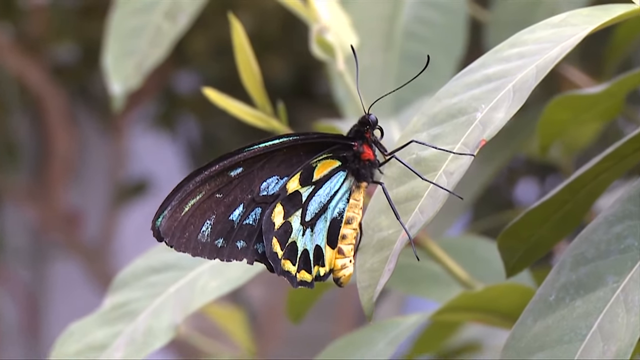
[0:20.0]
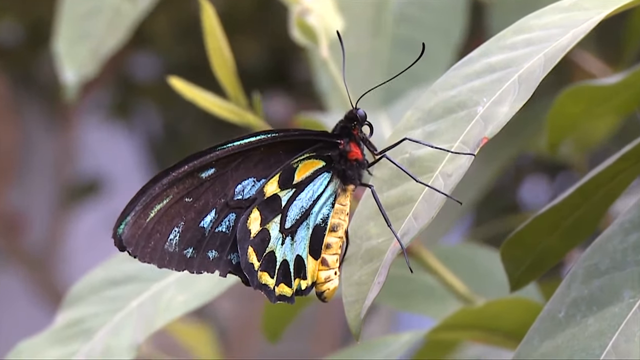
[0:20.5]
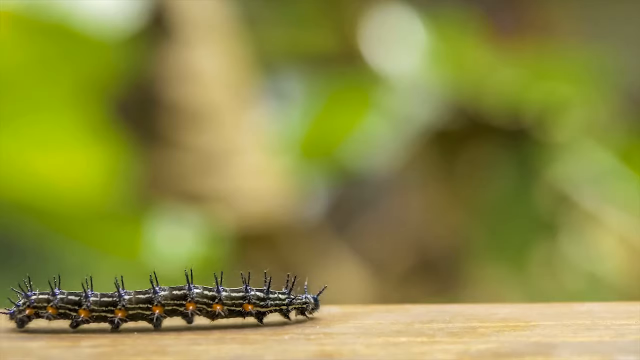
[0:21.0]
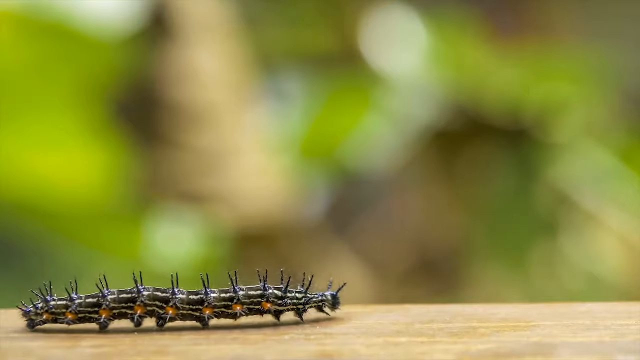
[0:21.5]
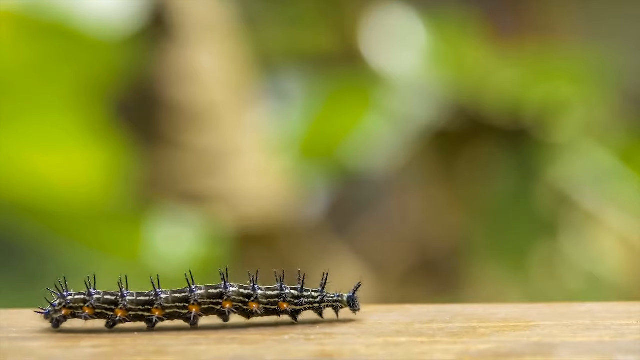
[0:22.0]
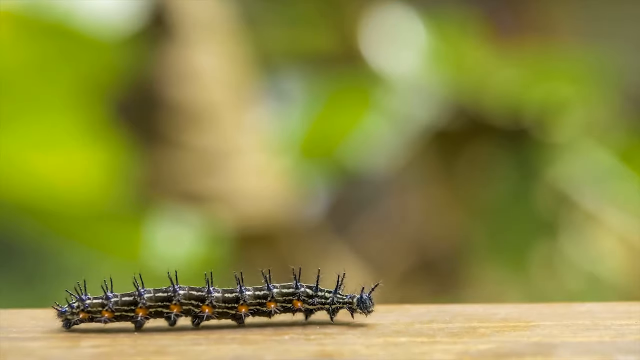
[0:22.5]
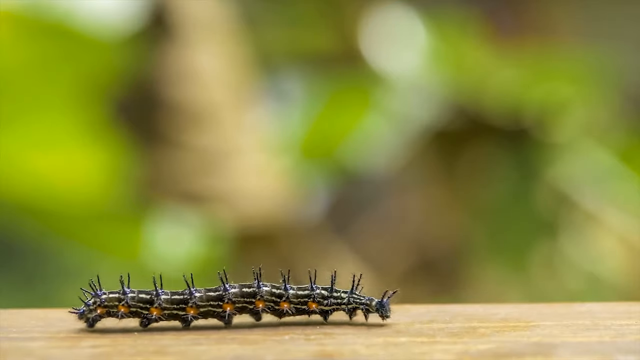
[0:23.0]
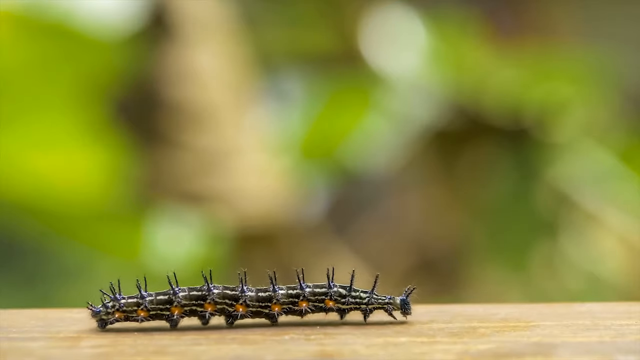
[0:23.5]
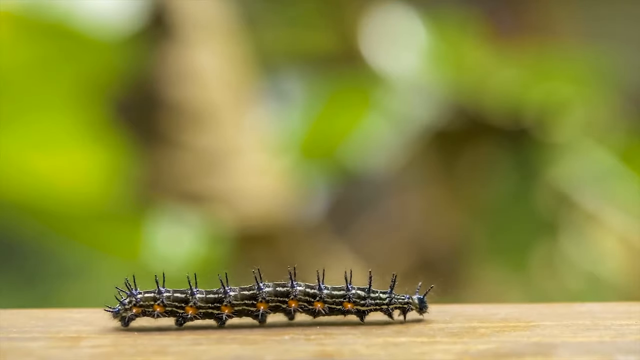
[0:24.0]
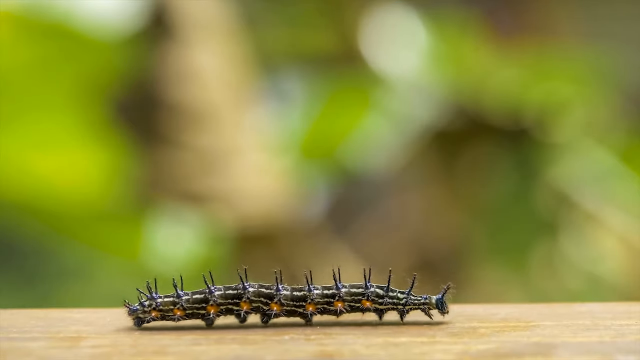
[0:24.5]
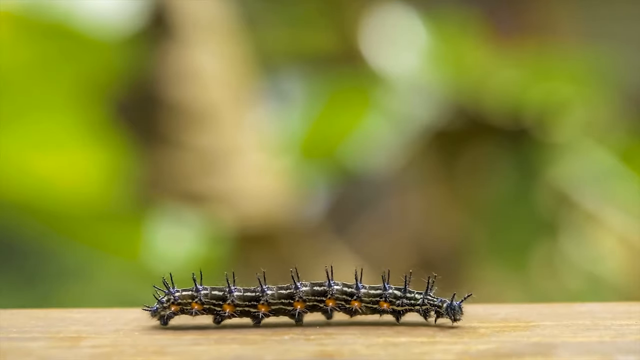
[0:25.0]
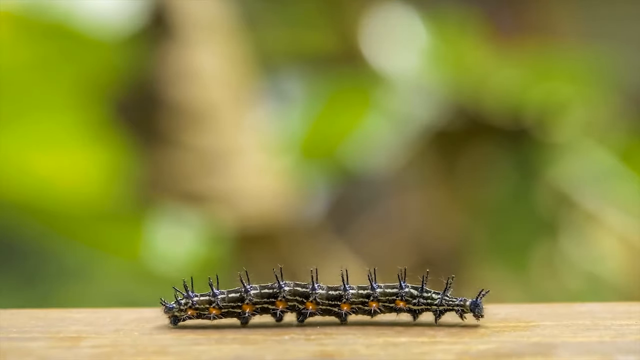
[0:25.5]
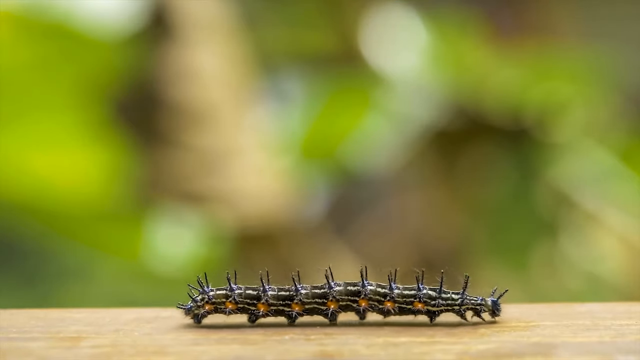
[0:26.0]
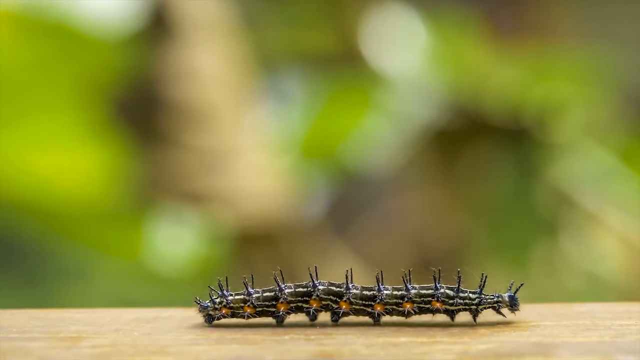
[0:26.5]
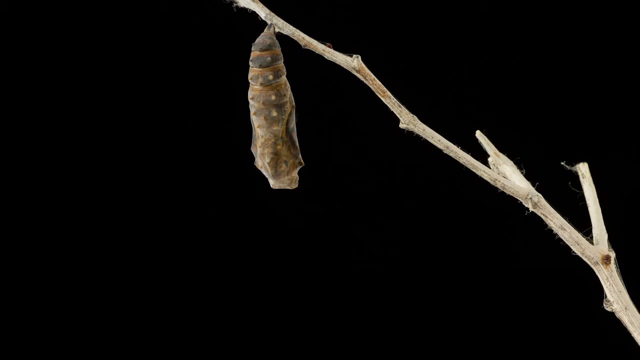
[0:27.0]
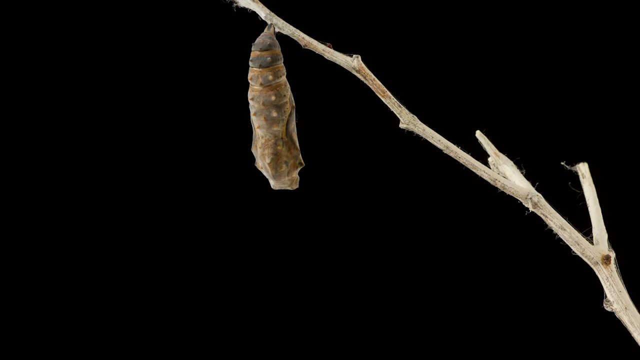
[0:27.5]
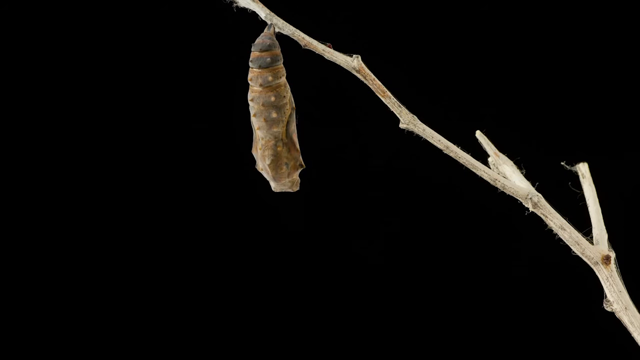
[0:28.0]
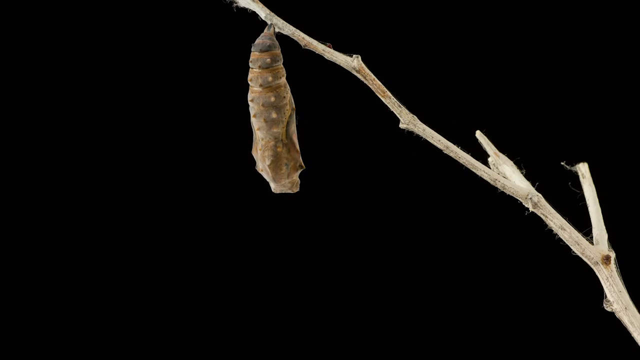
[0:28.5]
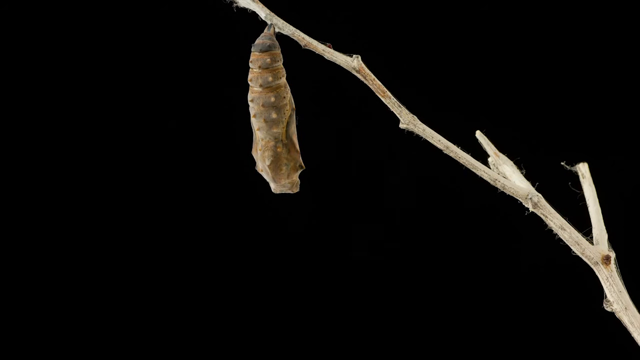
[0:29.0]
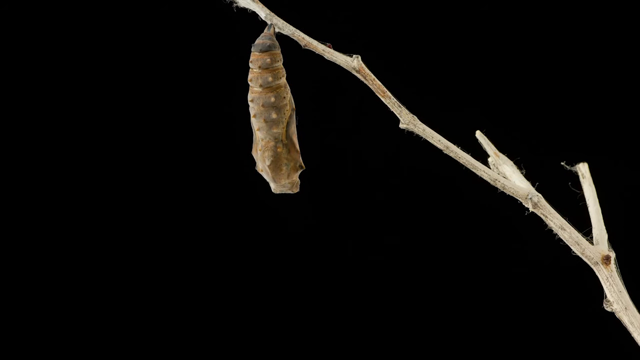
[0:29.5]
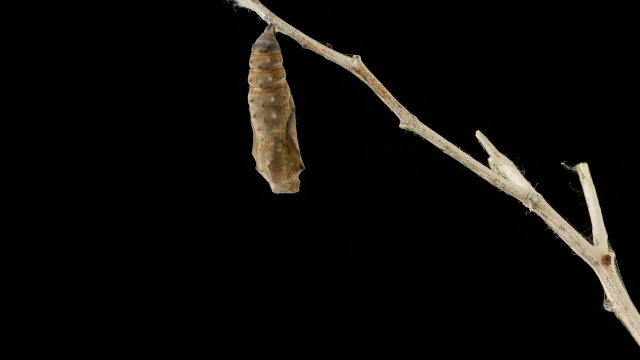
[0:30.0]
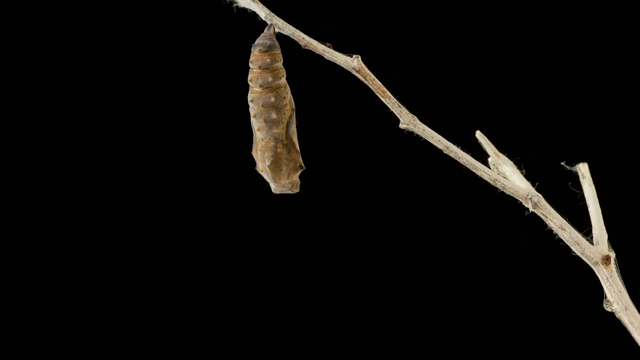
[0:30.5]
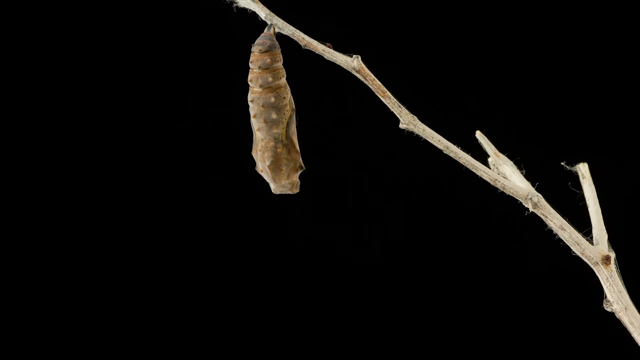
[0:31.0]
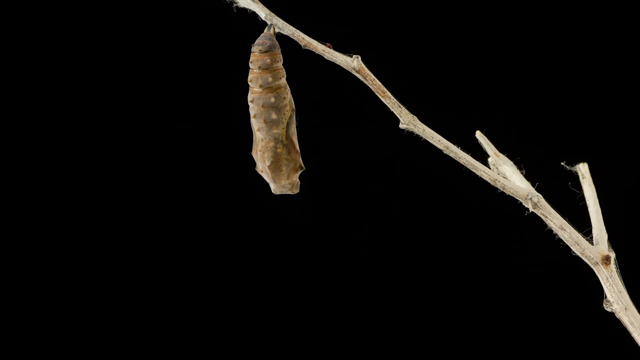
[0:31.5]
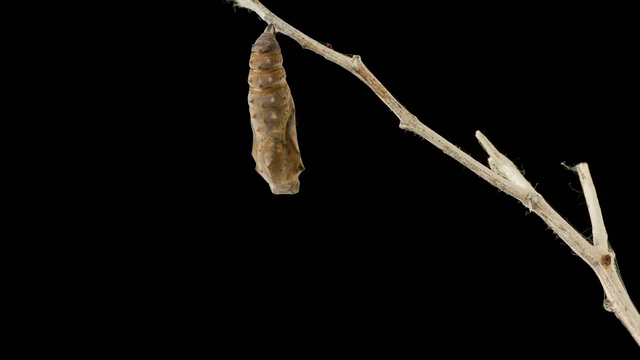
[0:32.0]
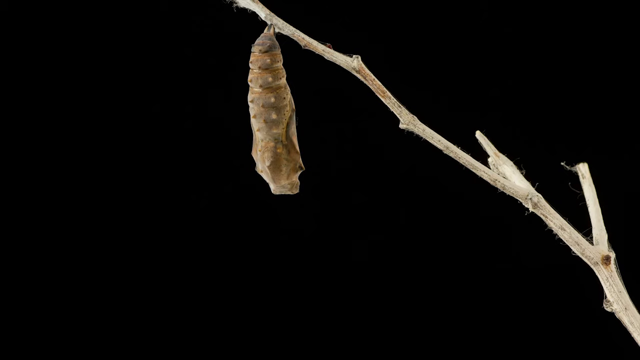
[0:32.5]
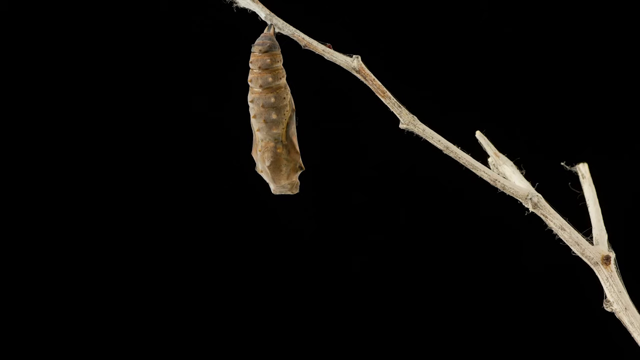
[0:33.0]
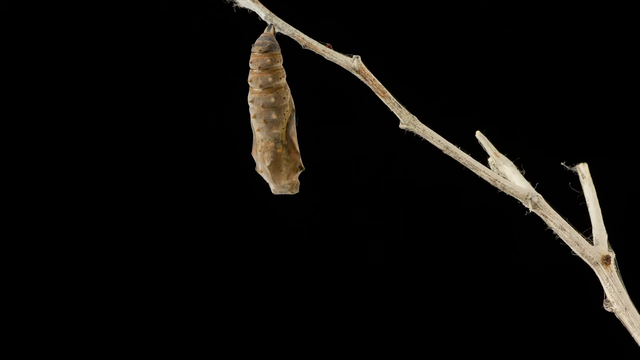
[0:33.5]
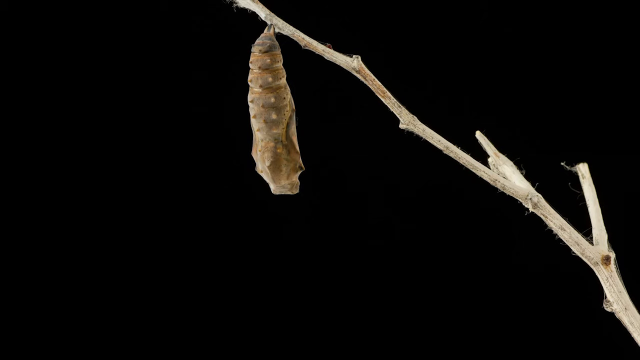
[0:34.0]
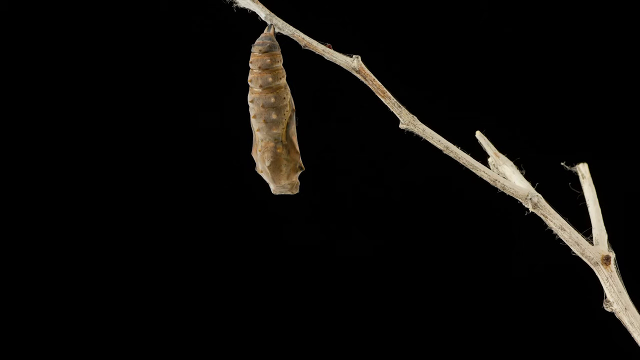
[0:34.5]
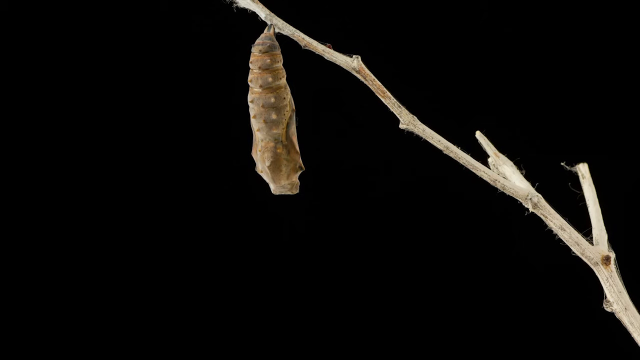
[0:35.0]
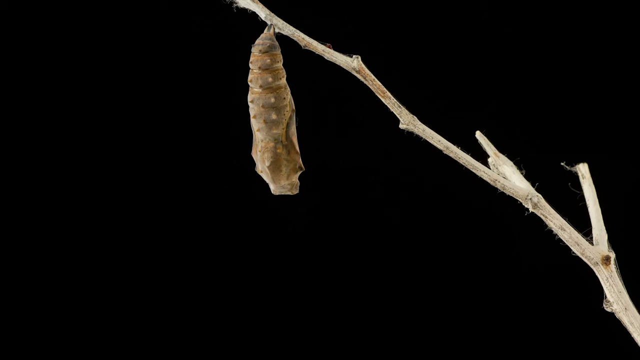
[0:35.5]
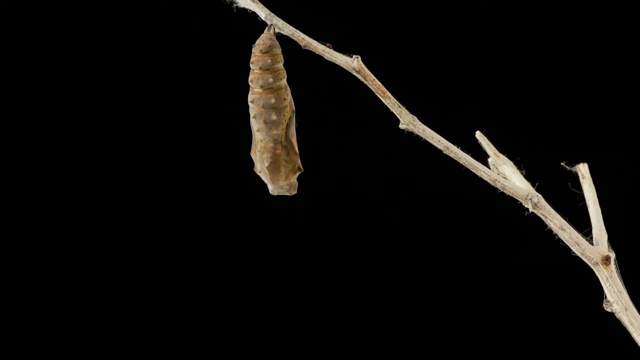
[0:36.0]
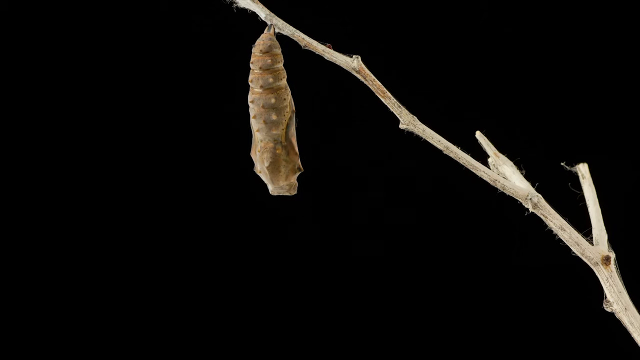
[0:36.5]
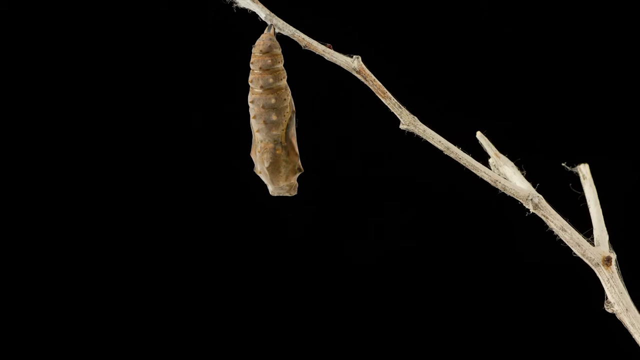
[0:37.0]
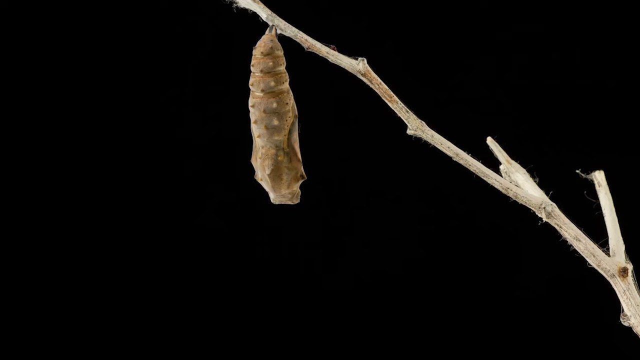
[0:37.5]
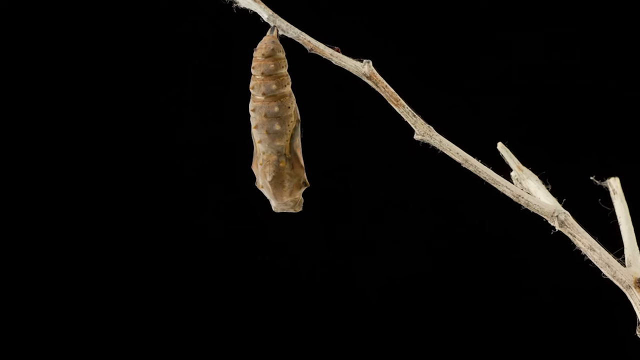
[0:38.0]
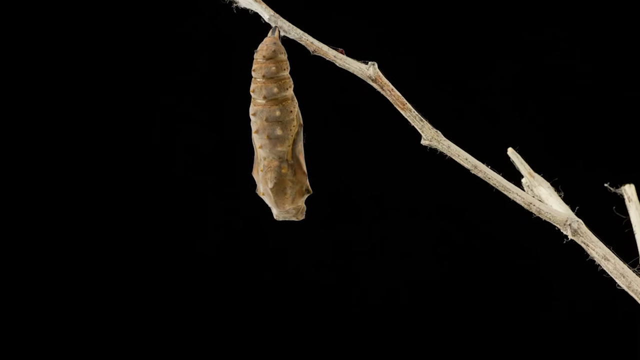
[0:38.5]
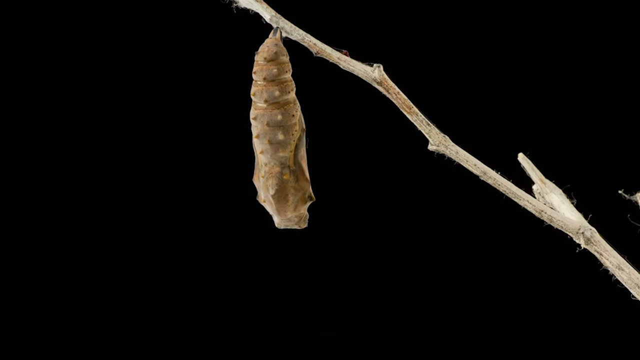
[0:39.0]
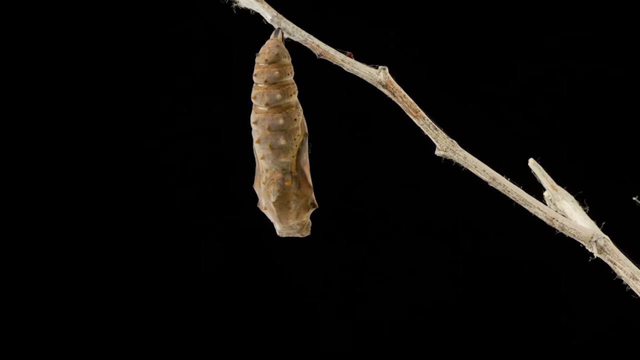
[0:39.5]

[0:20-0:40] The white lettering at the top reads "Butterflies, fun butterfly facts for kids." To the left of it is a yellow circle with a green circle inside, containing the face of a tiger that is orange with black and white stripes. A black butterfly with black legs, black antennae, and yellow and powder blue spots on its wings sits on top of greenish, grayish green leaves. Next, against a blurred greenish background with a flat brown section at the bottom, a dark gray caterpillar with little spikes on its top walks very slowly across. Then, against a black background, what looks like a gray cone hangs from a brown tree branch as the camera zooms in to the cone itself.